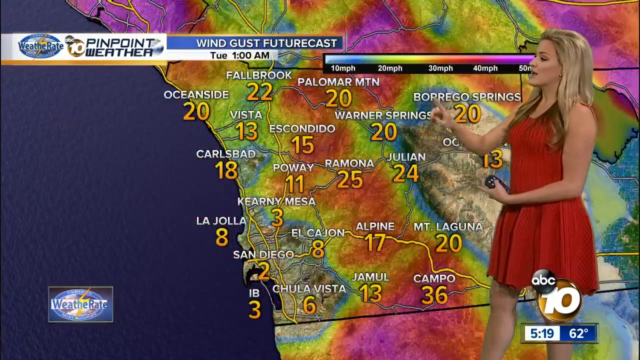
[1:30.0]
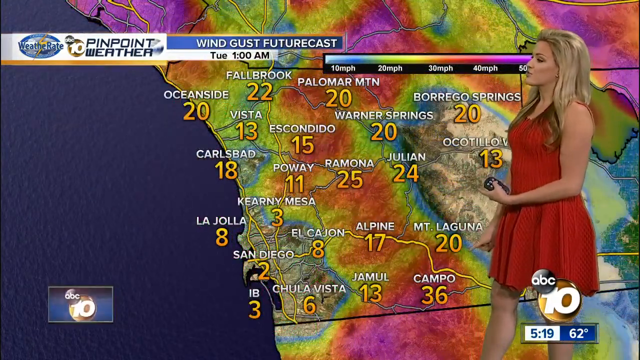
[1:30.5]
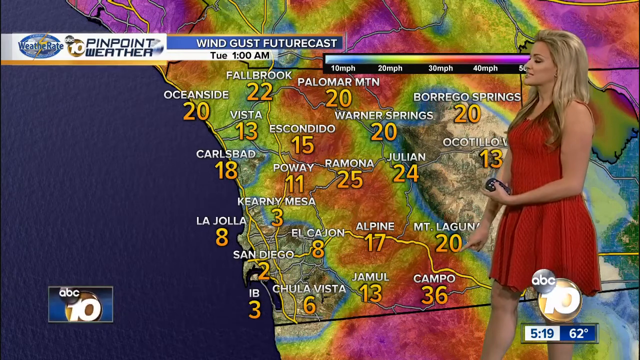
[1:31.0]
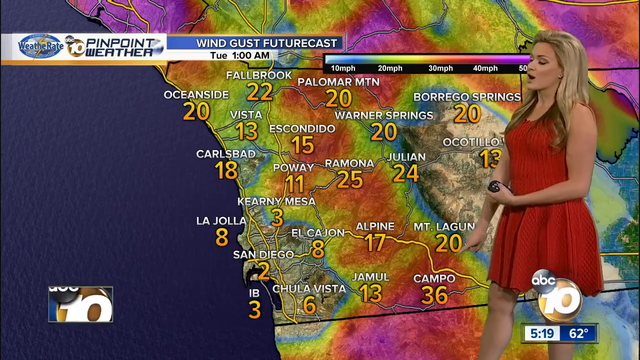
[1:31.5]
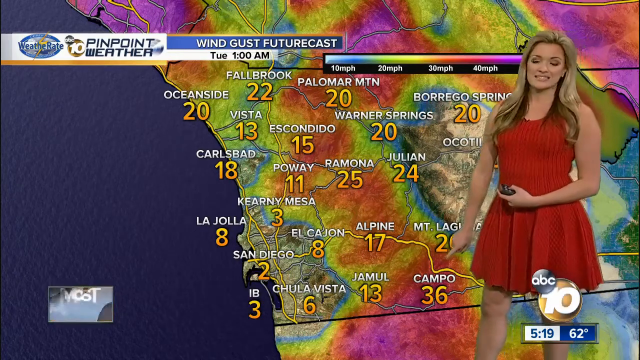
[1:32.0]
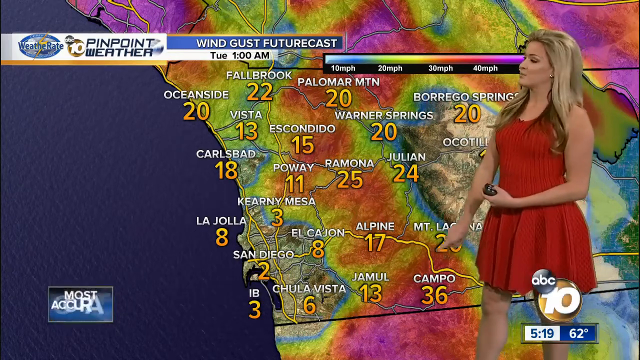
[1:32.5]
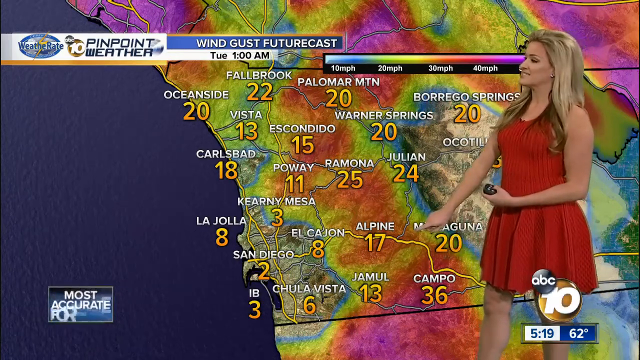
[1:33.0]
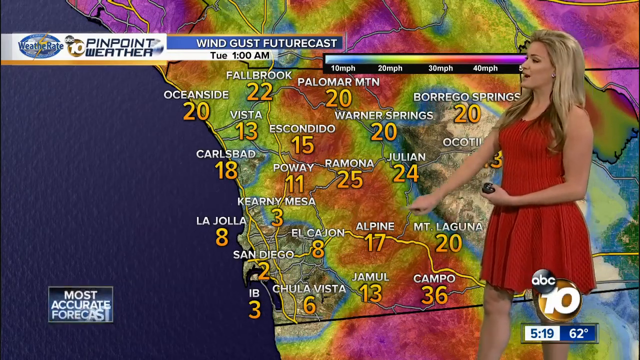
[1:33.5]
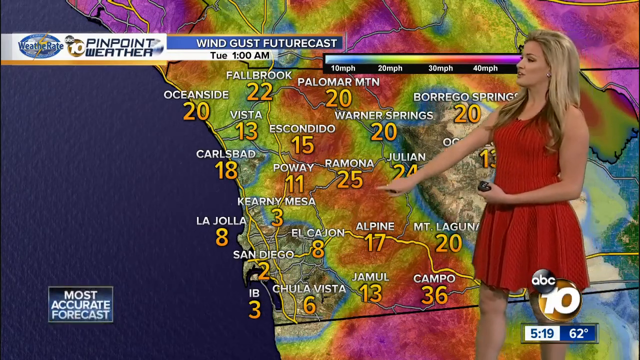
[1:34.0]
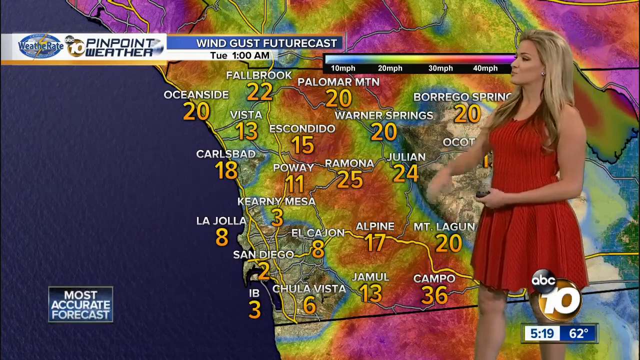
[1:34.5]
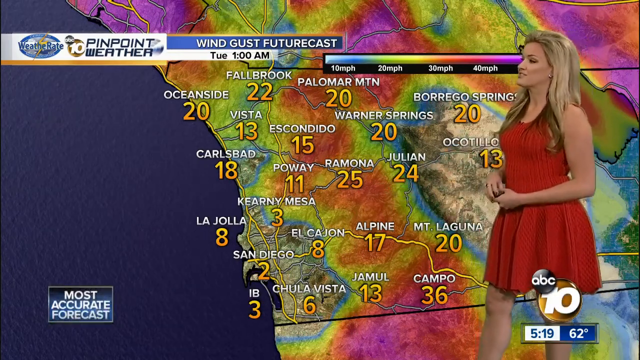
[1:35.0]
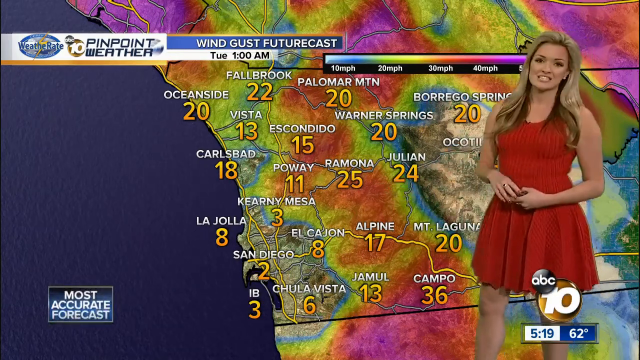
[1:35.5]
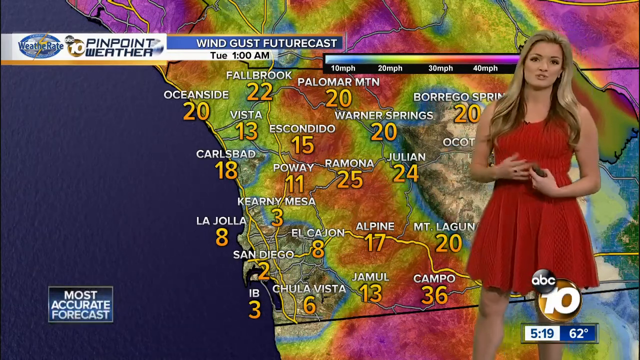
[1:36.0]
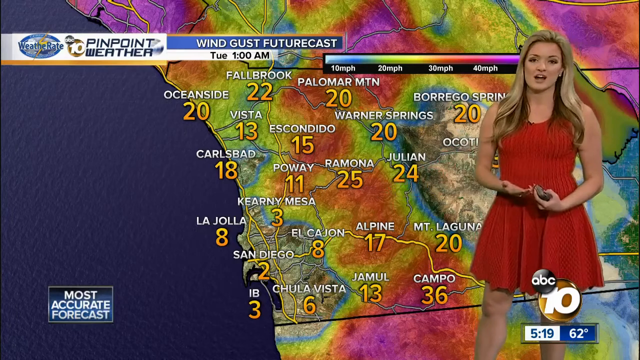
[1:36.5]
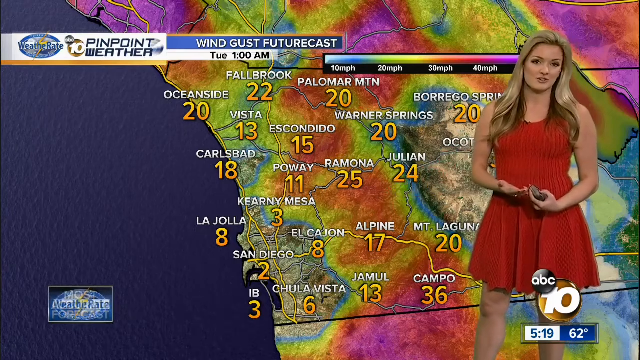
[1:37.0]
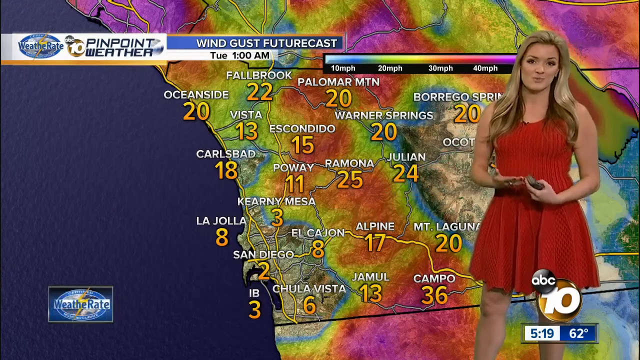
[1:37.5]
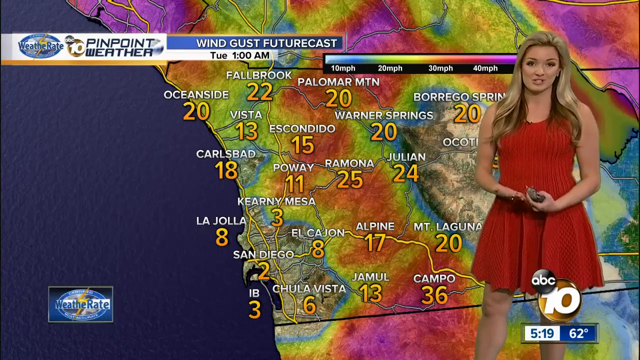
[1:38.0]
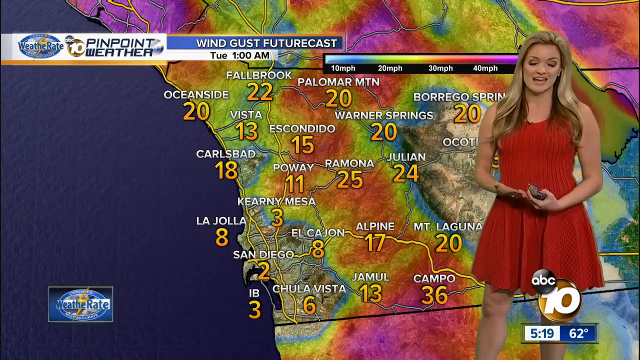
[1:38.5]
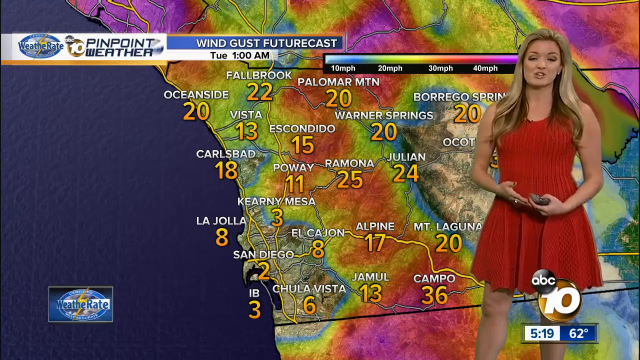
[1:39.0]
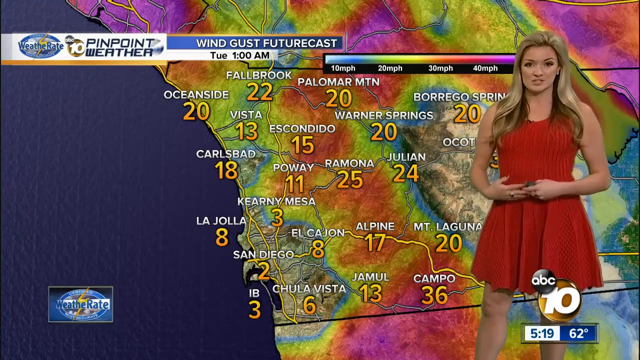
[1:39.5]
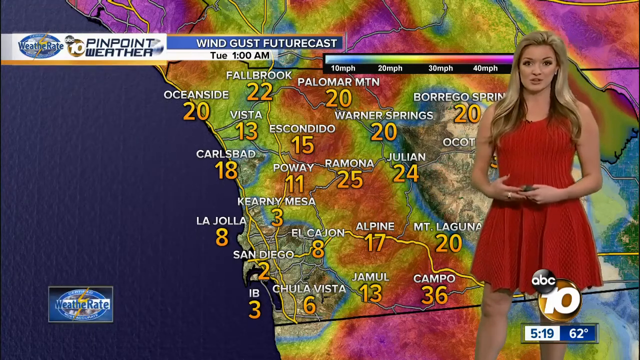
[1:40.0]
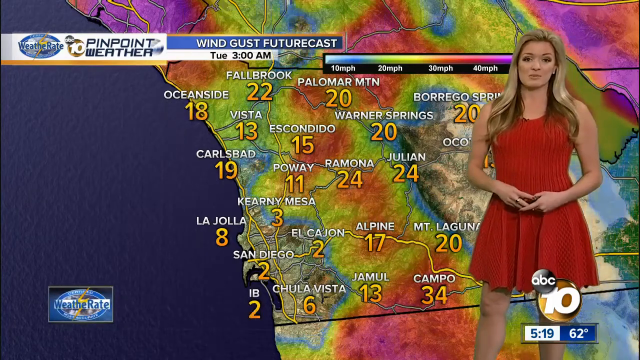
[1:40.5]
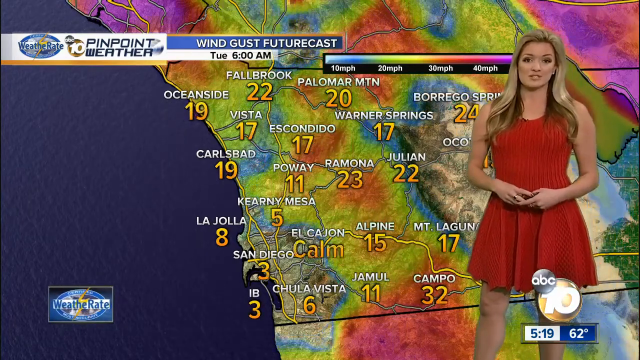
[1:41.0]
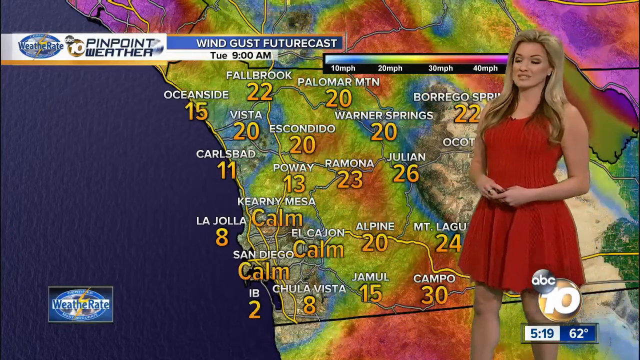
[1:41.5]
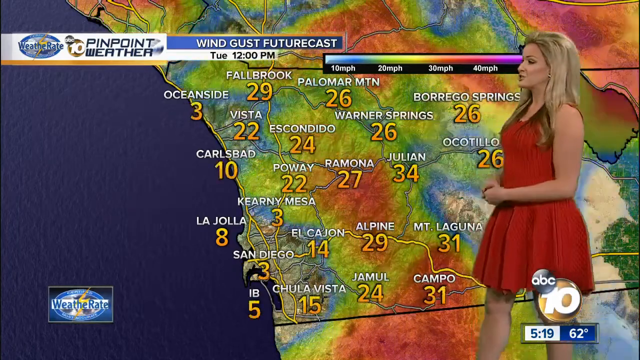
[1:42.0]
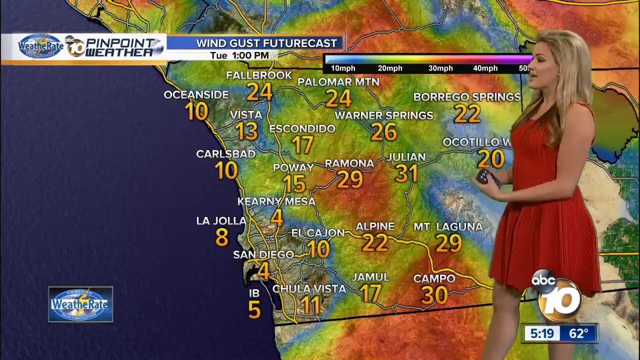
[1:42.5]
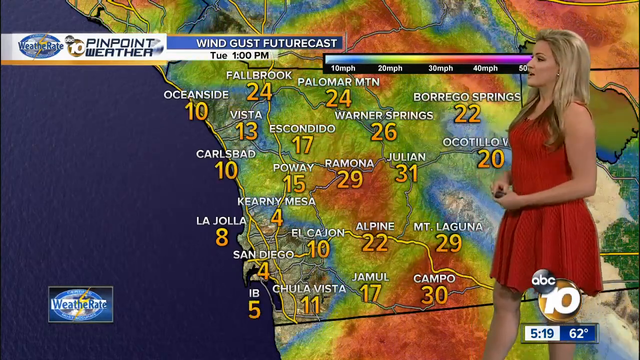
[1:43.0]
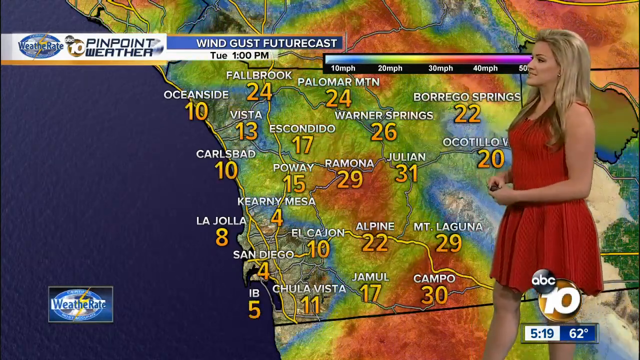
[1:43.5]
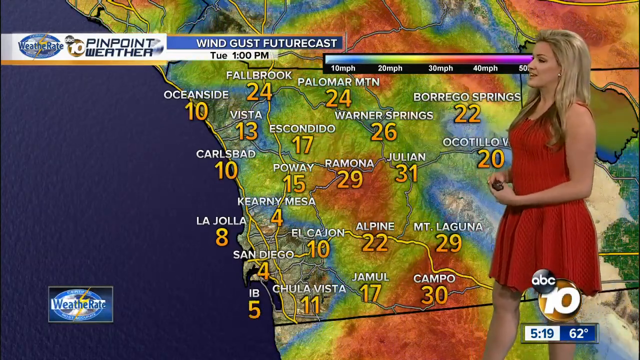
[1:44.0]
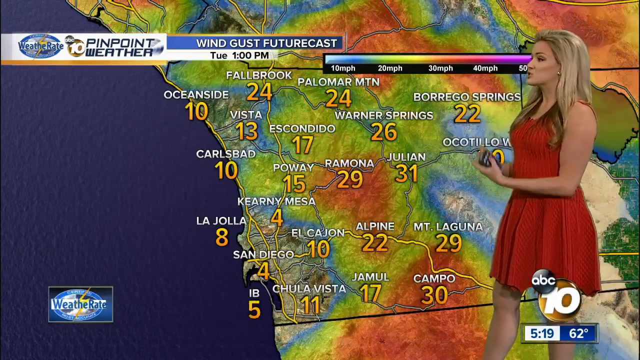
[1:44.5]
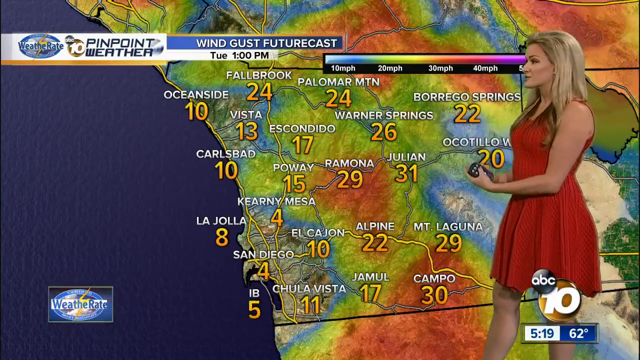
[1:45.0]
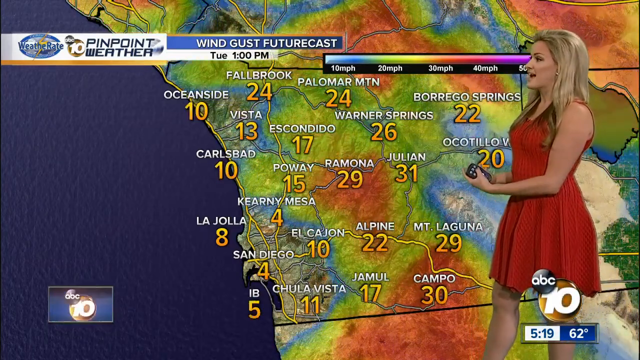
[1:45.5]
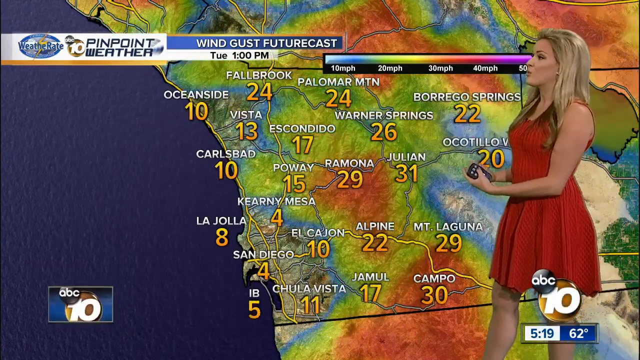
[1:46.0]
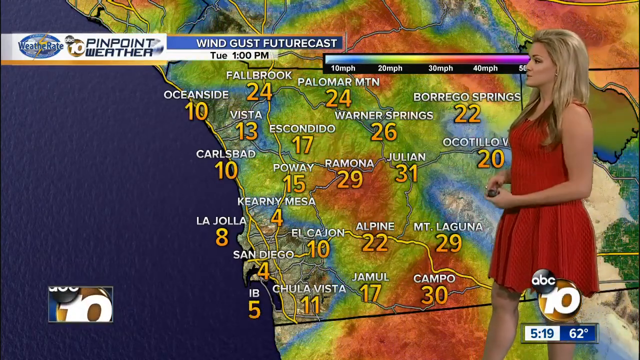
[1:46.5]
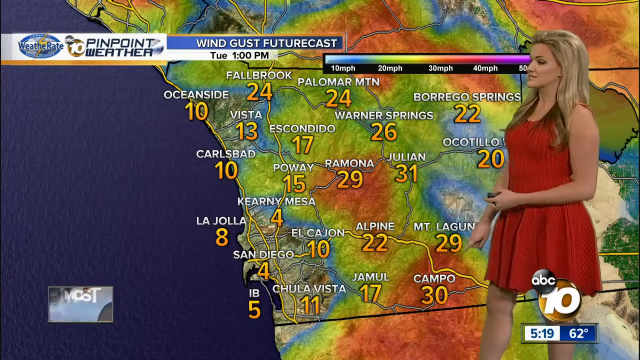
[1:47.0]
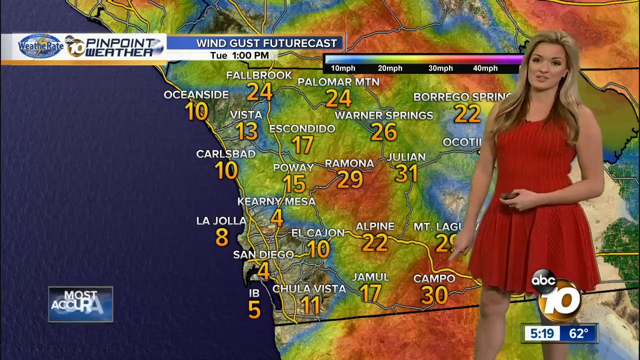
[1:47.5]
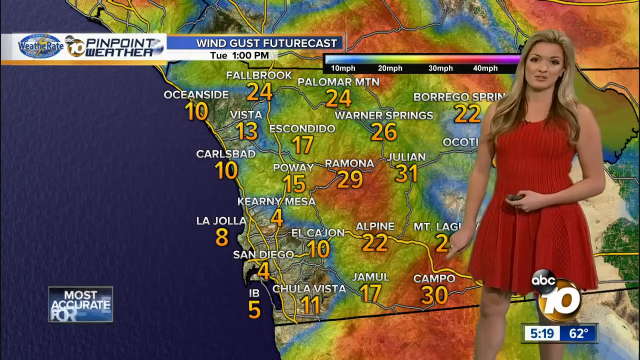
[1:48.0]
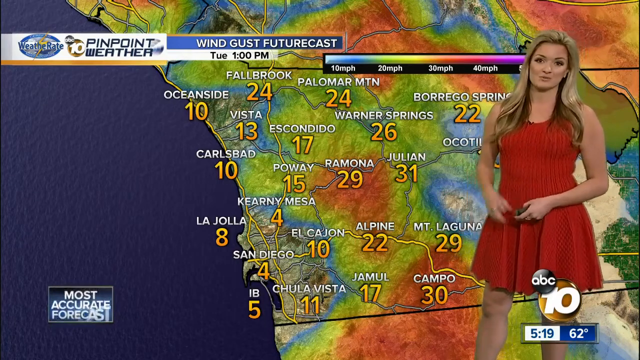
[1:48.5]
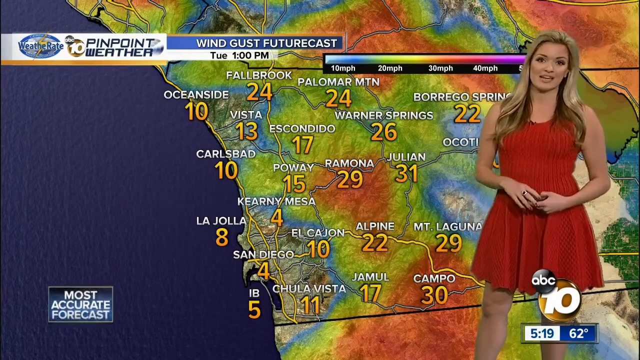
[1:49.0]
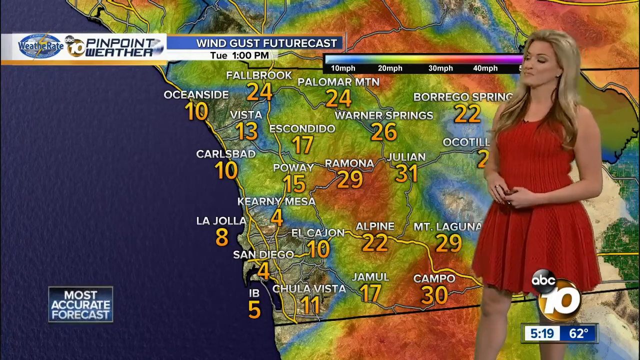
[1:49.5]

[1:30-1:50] The weather woman appears to stand in front of the same map the whole time. The ocean is navy blue on the left, and the map covers the coastal area around Oceanside, La Jolla and San Diego. Under "wind gust future cast," the times change quickly, and the temperatures and the colored shading of the weather patterns change a little along with them, in yellows, oranges, blues, greens and reds. The temperatures are in yellow and the city names are in white all caps. The map also shows some mountain ranges and topographical differences. To her left is a small color spectrum running from blue for very slow wind up to reddish-pink colors at 50 miles per hour. She continues talking to the viewer, turning to the side at times. In the lower right, the time is in blue text in a white box, with the temperature in white text in a blue box right next to it, reading "519" and "62 degrees." Above it, the 10 logo is a light orange circle with a very large number 10 in the middle, and the ABC logo overlaps it at its upper left.